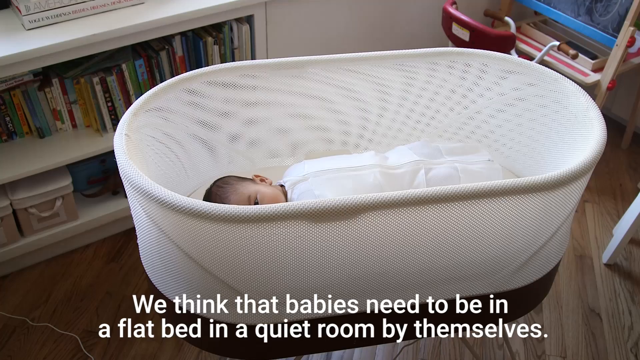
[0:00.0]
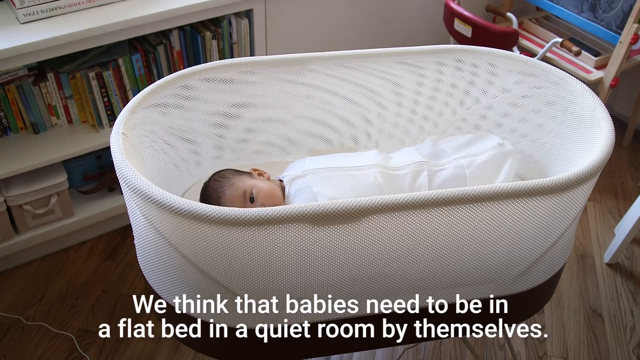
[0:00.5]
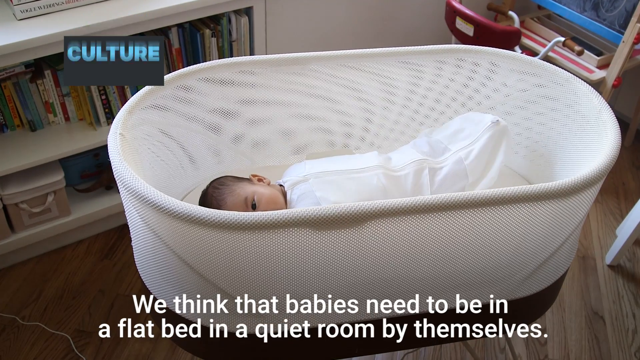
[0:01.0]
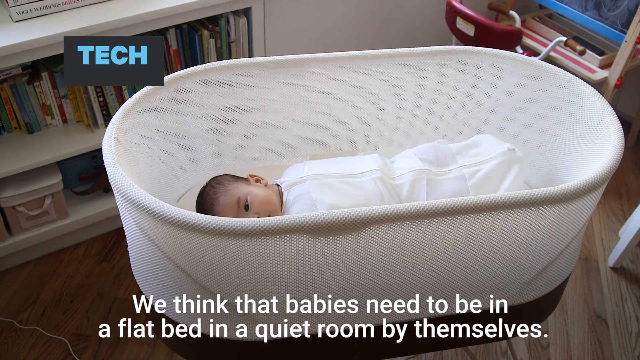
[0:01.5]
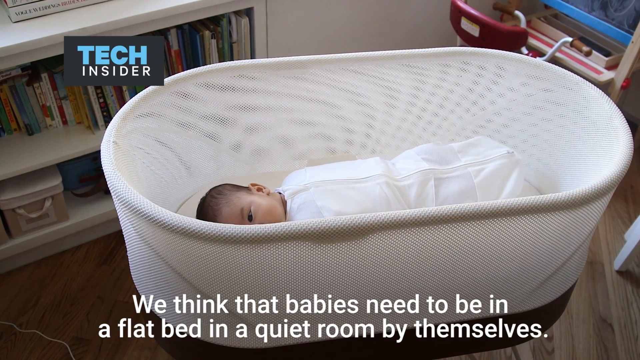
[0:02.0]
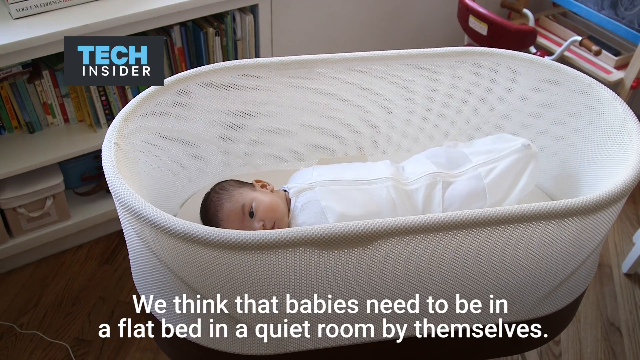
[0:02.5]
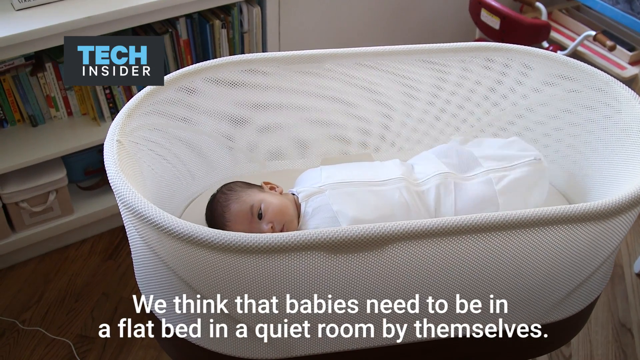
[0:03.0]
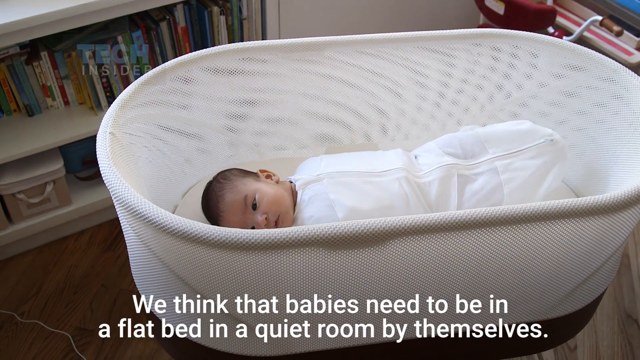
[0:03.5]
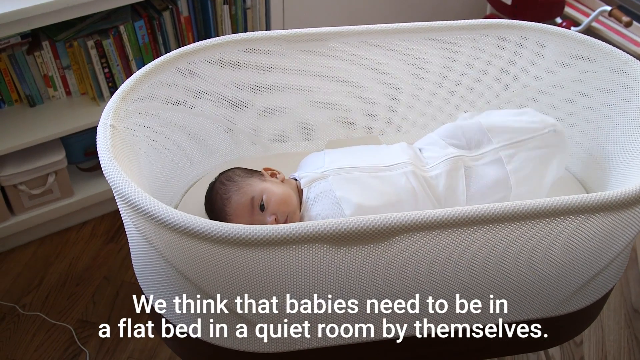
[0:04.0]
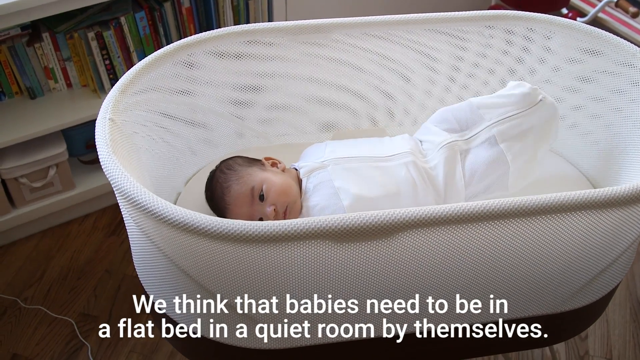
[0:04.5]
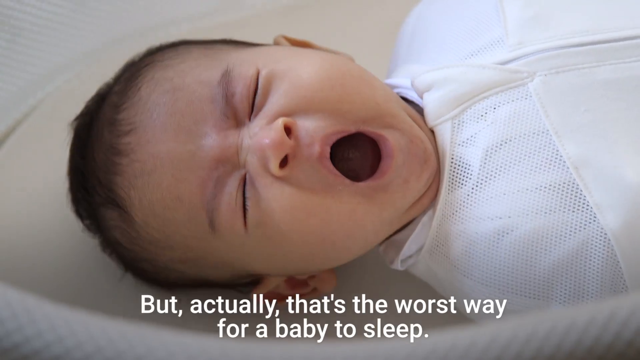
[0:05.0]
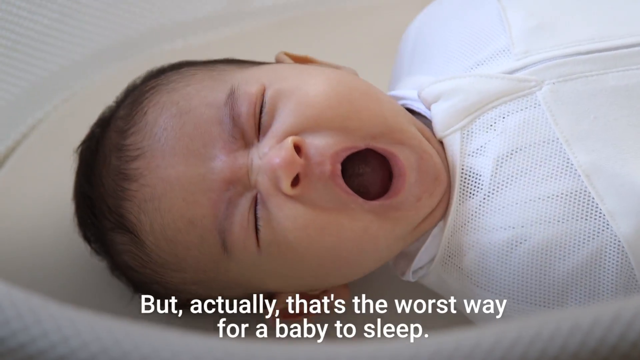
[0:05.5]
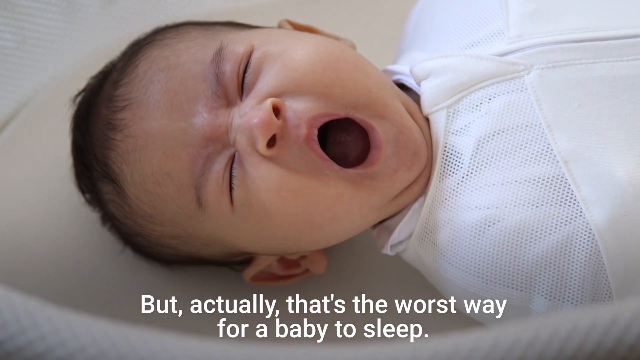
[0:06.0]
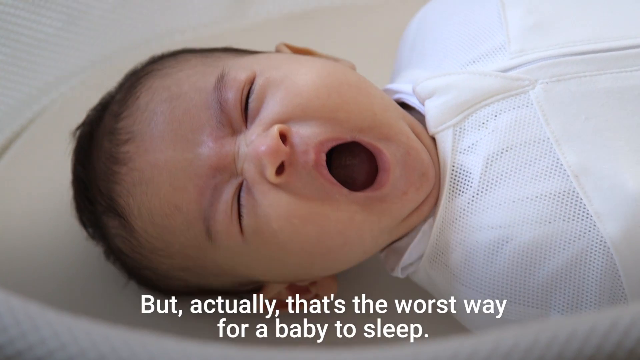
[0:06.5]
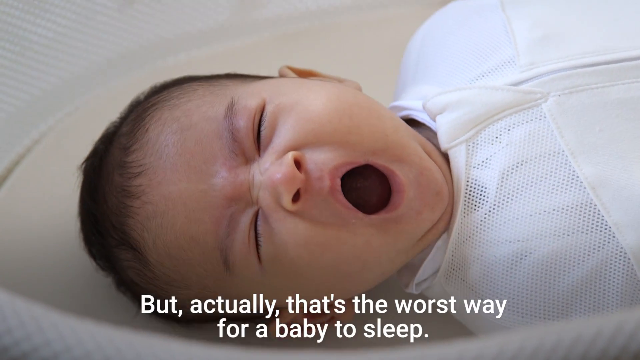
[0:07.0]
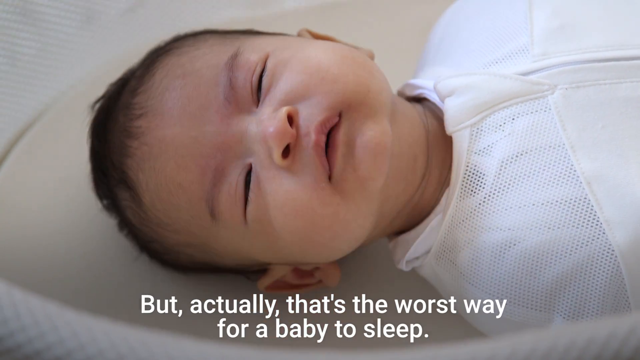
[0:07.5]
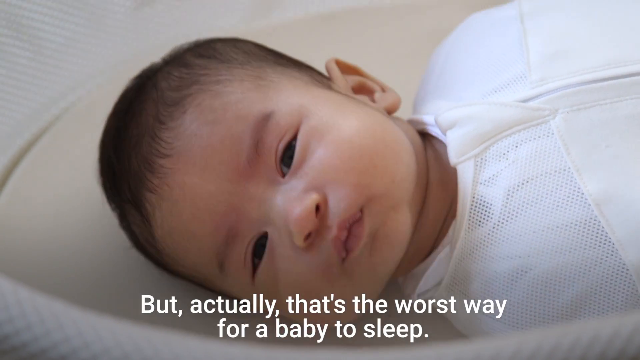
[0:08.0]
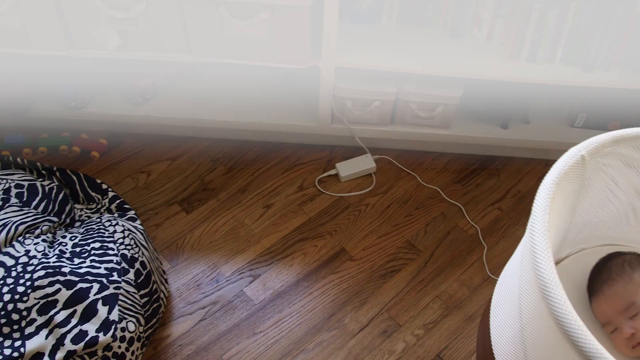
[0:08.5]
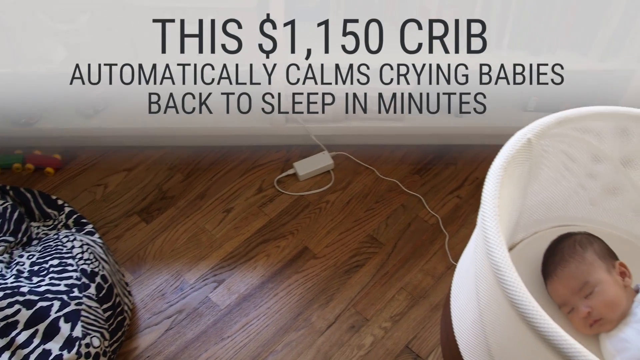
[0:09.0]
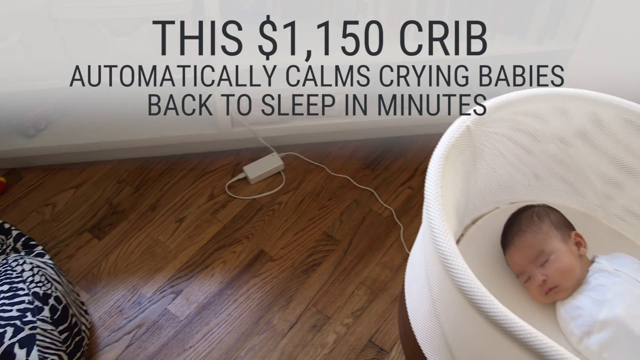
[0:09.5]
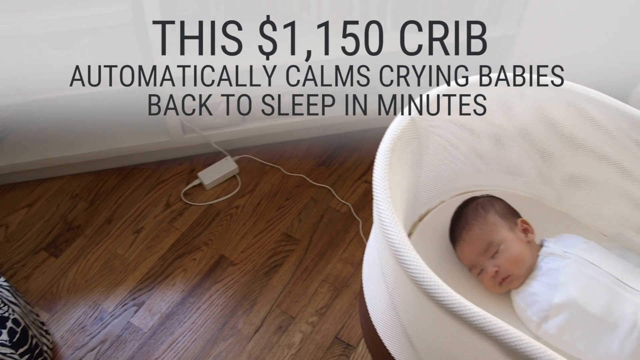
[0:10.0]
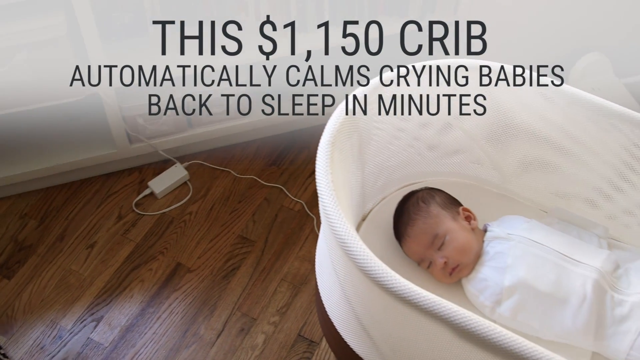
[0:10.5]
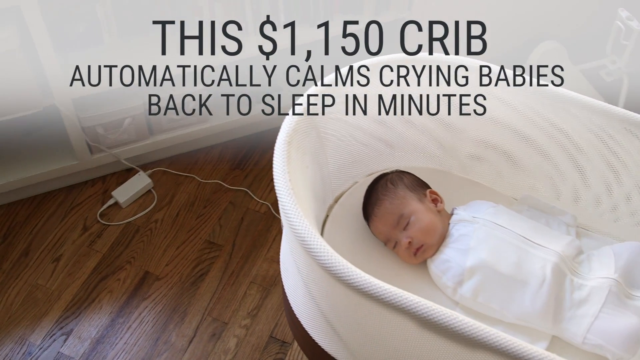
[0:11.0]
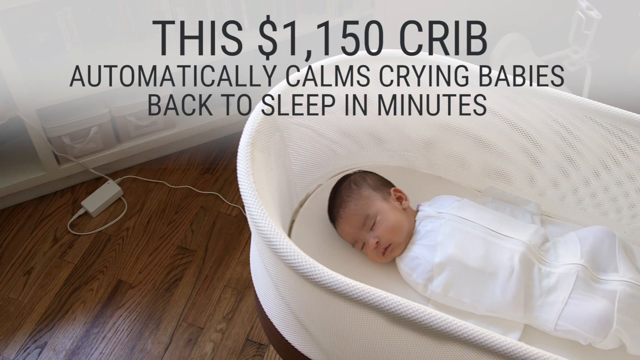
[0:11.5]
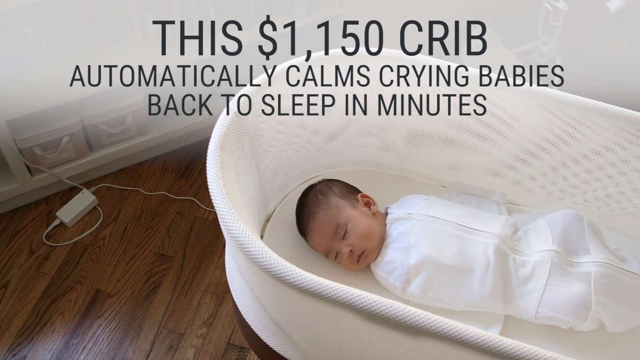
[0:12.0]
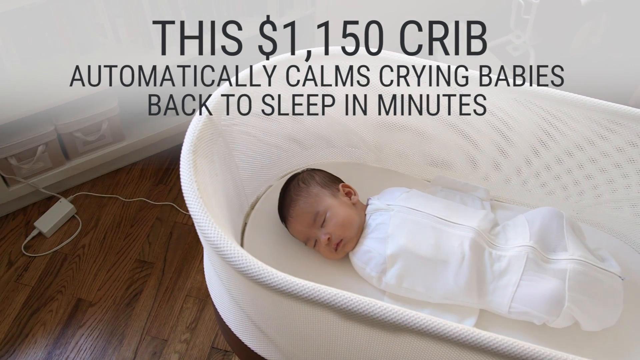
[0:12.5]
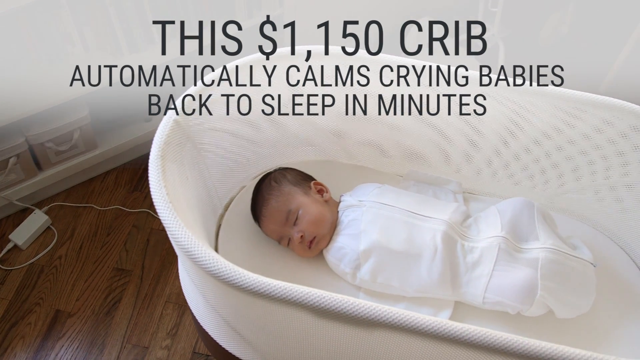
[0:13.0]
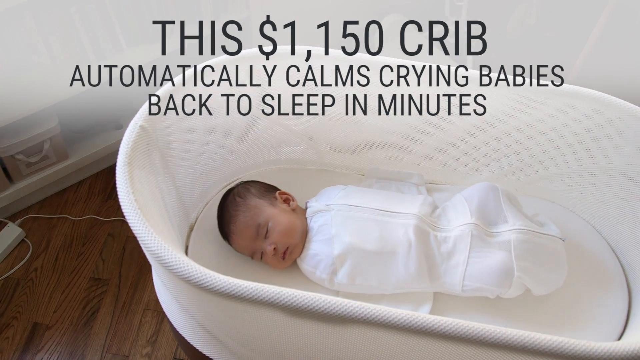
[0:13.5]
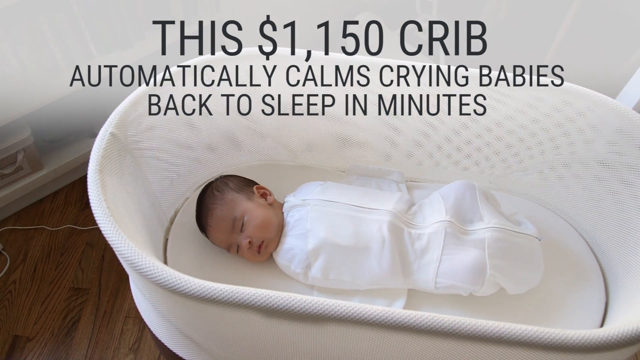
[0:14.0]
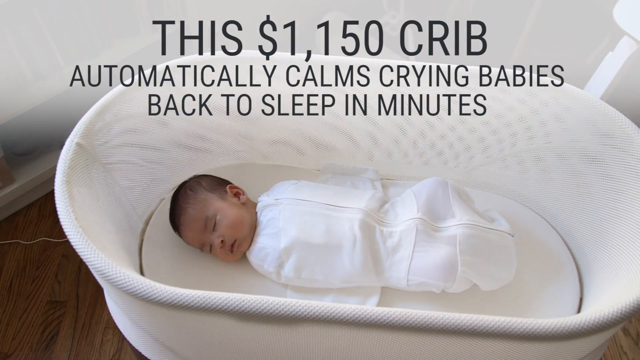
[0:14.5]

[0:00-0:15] A baby rocks back and forth in a white cradle, looking toward the camera. The baby seems very content and relaxed with his eyes closed, apparently sleeping as the cradle rocks automatically. The baby appears to be of Asian descent. White text runs across the bottom of the screen and seems to refute the technology being portrayed. A logo reading "Insider Tech" is in the bottom right of the screen, and a Tech Insider logo is written in the top left.